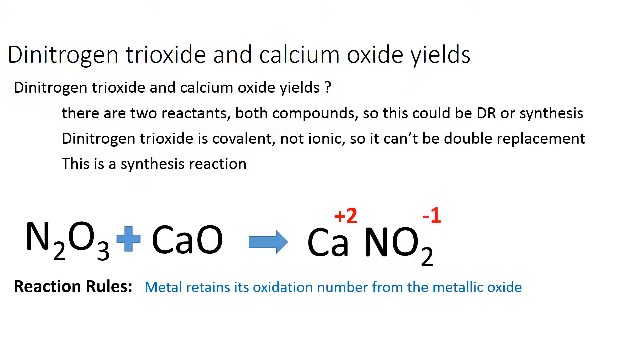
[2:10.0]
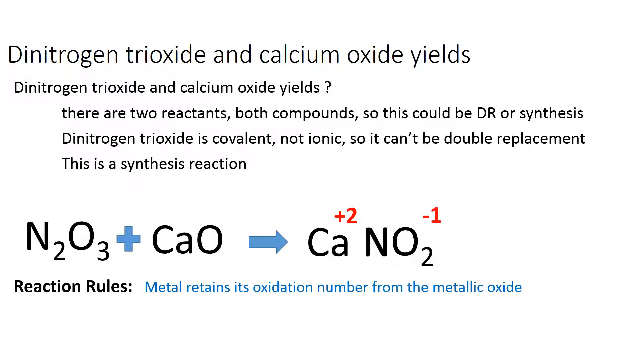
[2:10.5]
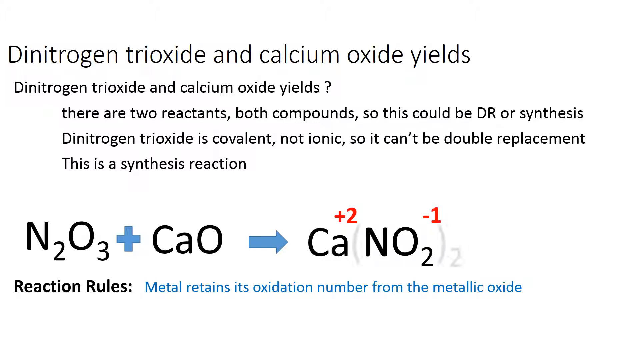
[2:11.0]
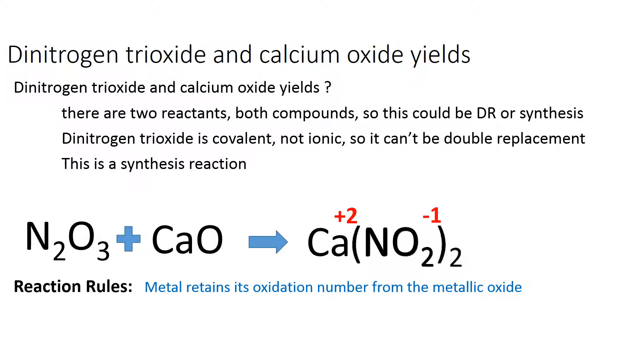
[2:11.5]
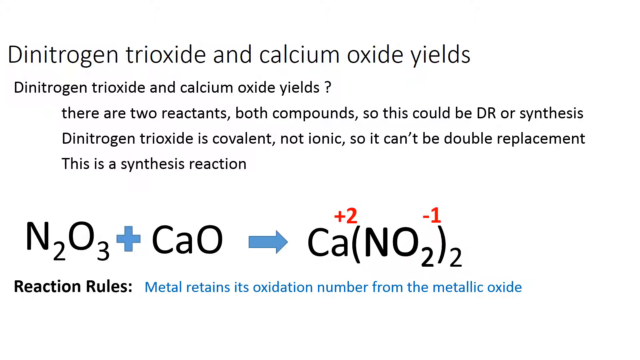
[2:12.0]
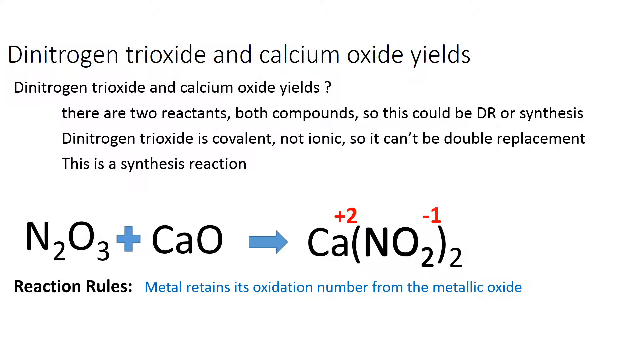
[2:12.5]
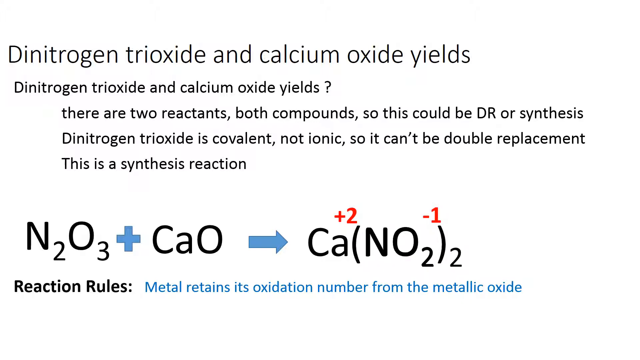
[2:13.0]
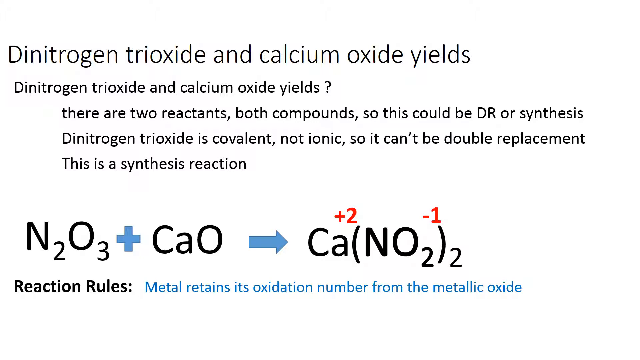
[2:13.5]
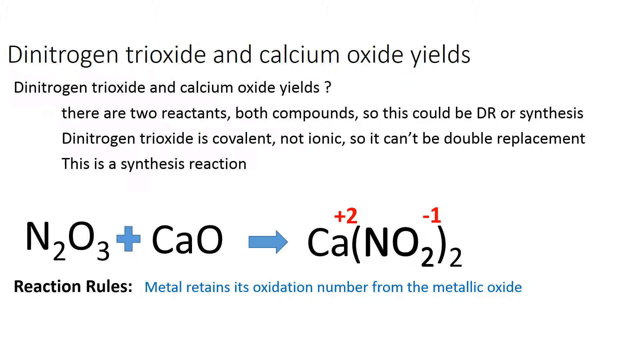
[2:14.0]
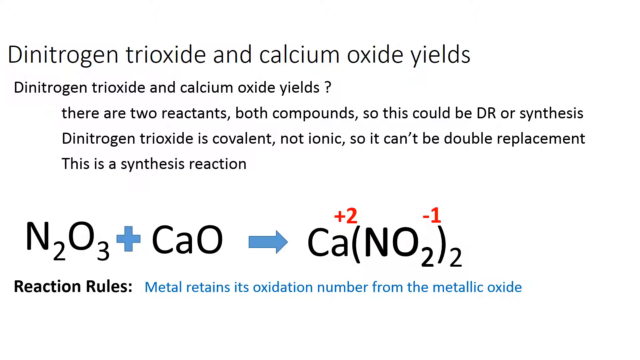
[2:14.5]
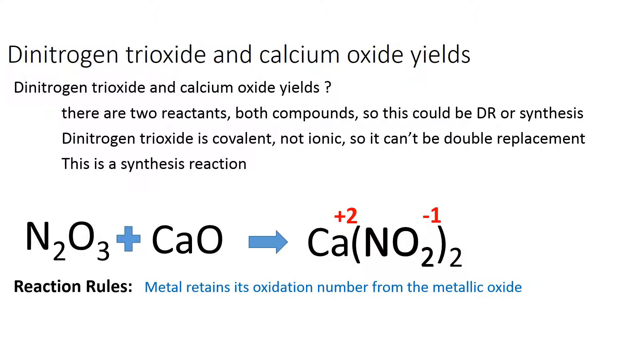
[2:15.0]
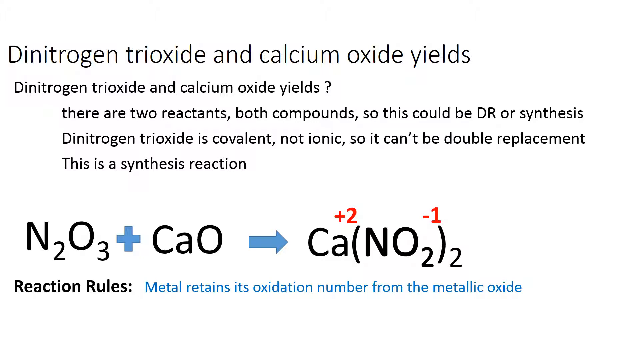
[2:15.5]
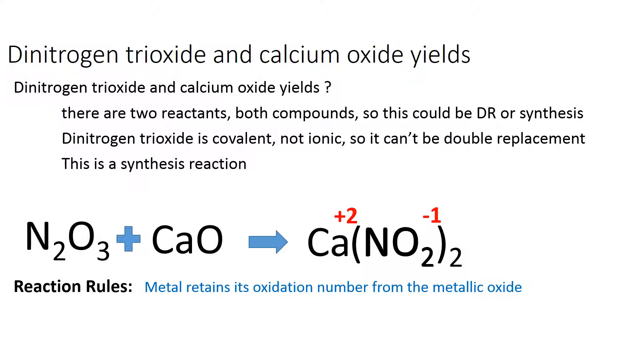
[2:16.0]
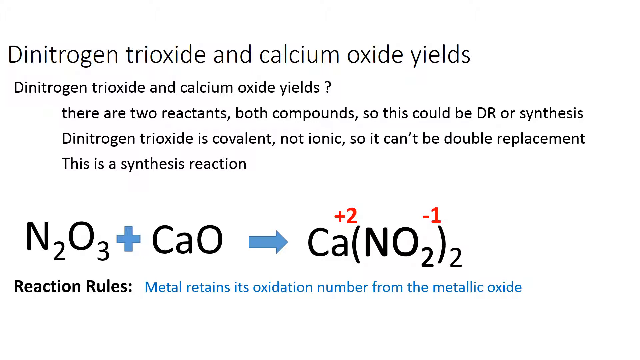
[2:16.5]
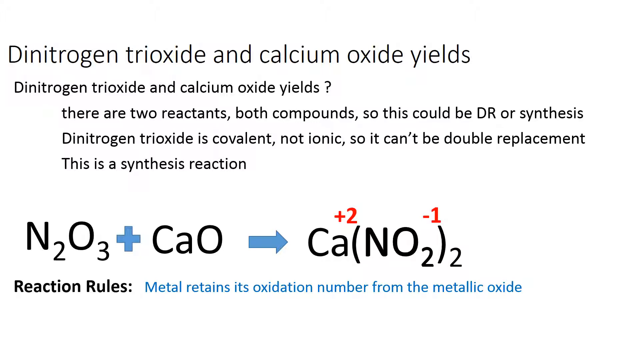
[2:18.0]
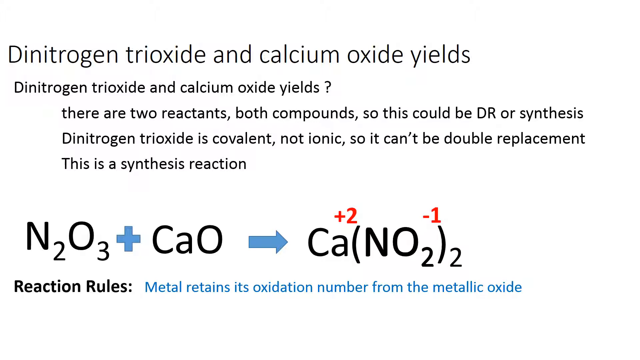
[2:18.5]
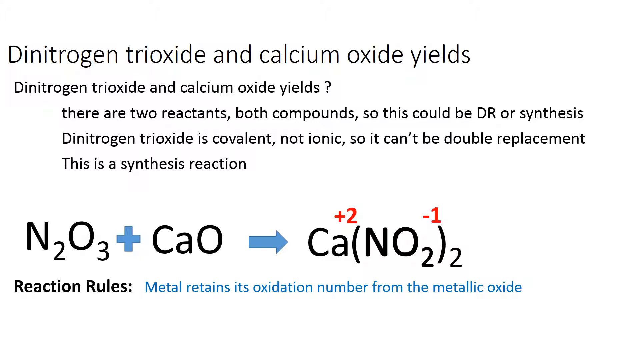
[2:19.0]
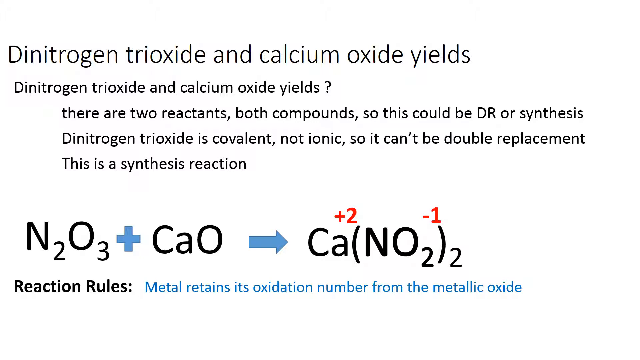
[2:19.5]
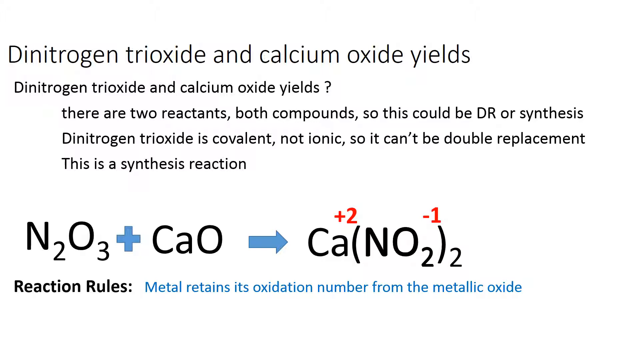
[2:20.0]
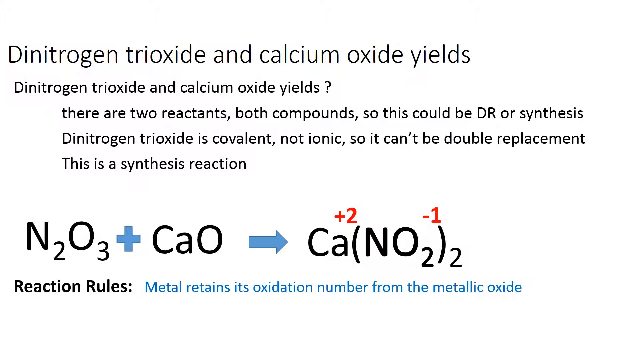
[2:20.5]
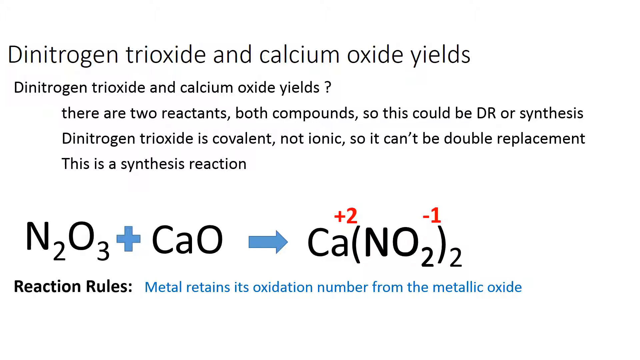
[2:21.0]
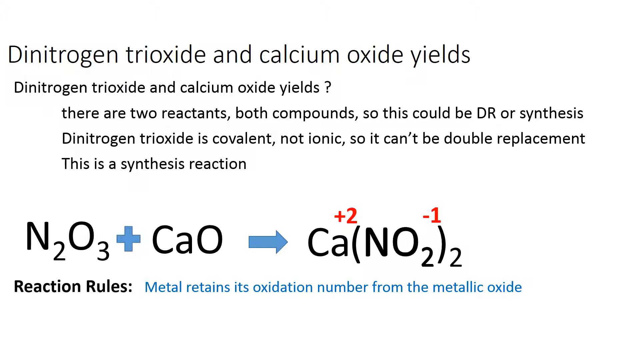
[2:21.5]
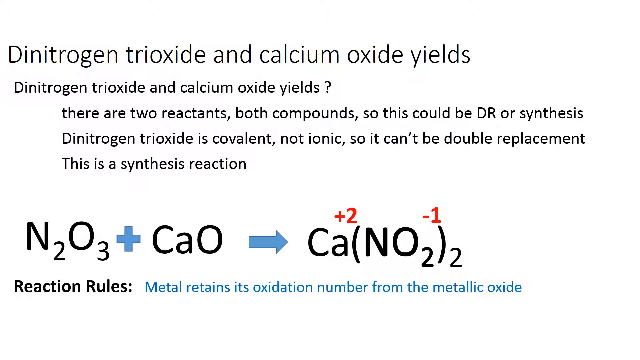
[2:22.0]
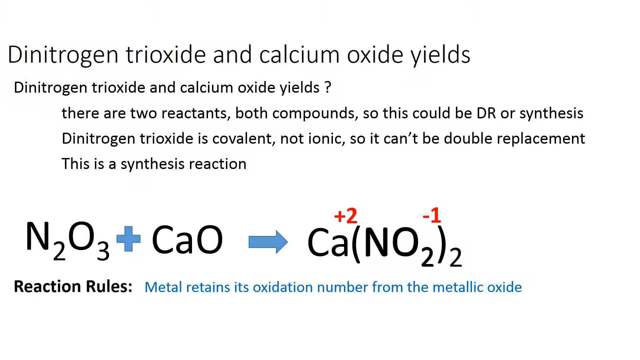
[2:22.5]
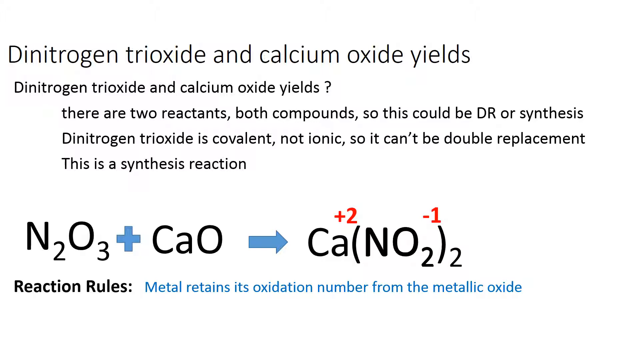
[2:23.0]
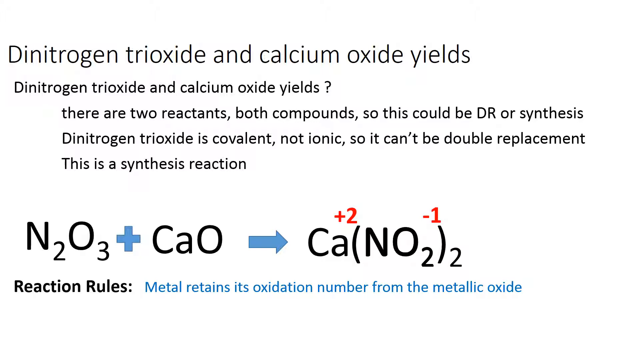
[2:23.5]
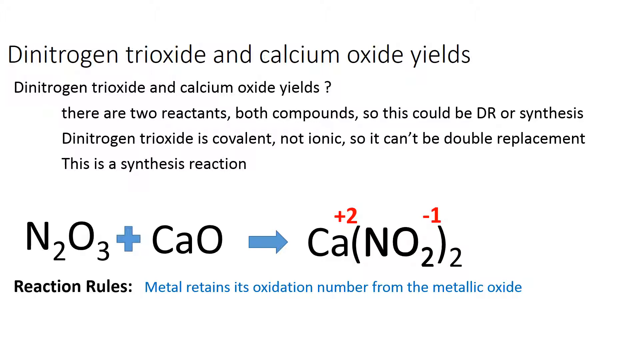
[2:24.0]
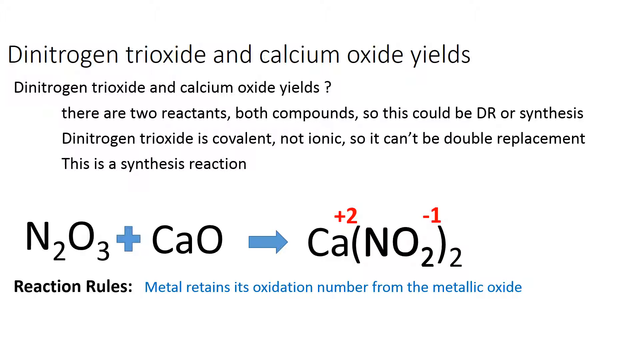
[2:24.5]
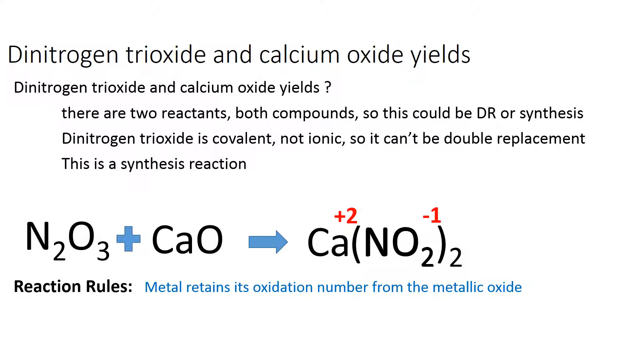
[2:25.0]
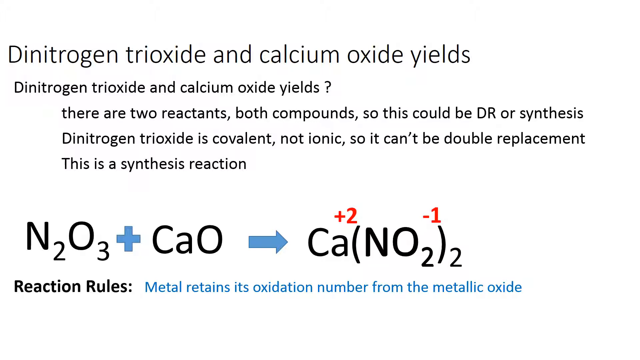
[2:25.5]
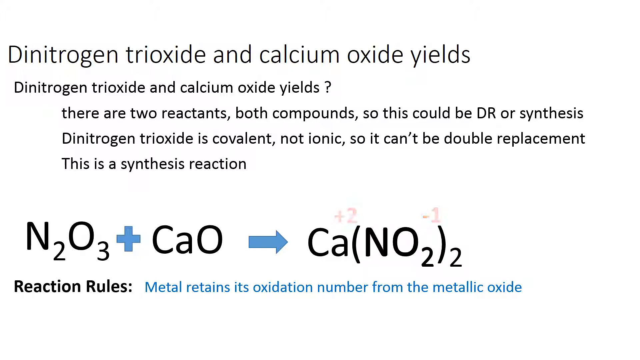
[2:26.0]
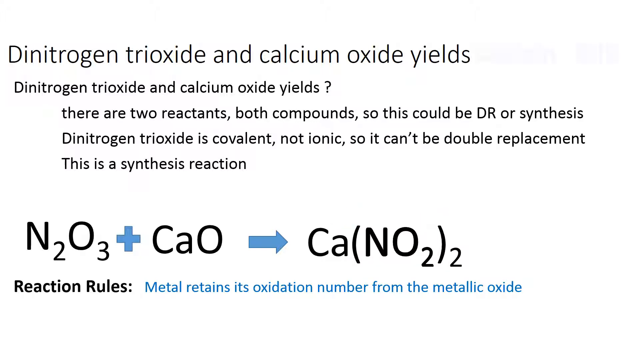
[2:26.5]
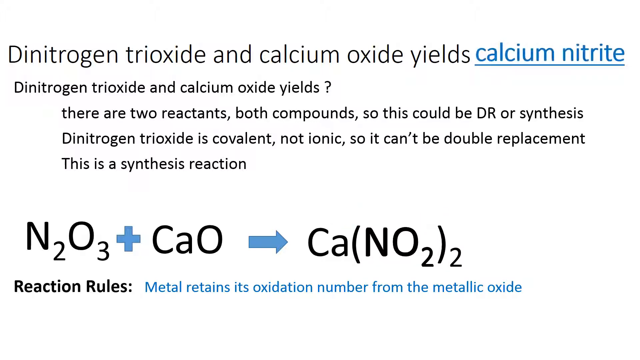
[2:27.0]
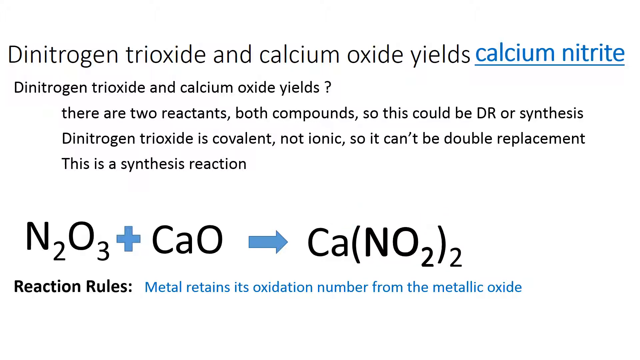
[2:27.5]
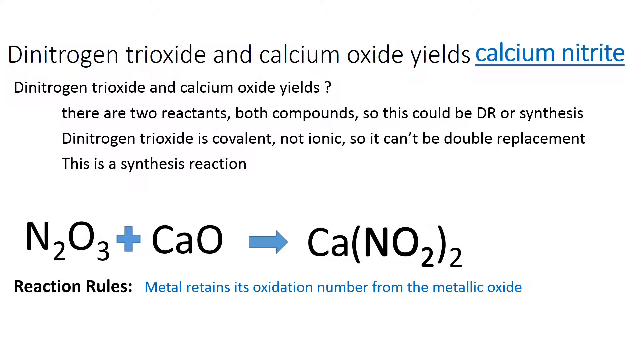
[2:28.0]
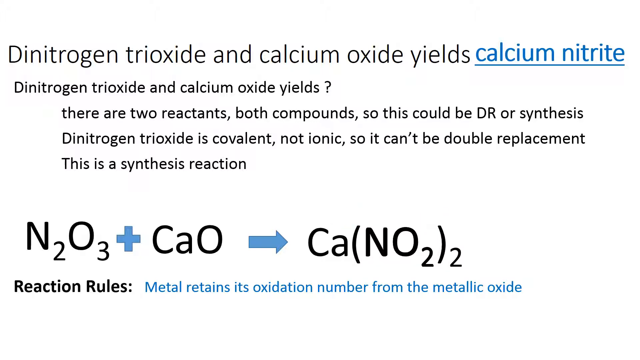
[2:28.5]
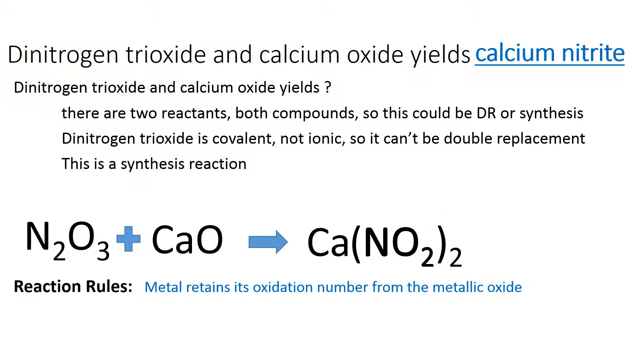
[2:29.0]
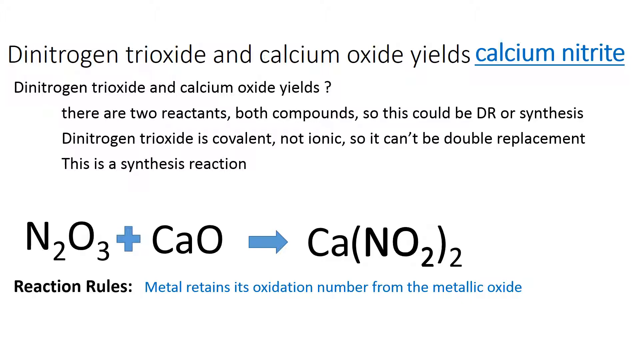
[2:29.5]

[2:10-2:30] On a white background, black text at the top says "Dinitrogen Trioxide and calcium oxide yields." Beneath it, smaller black text says "Dinitrogen trioxide and calcium oxide yields" with a ? to its right, followed by black lines saying "there are two reactants, both compounds, so this could be DR or synthesis," "Dinitrogen trioxide is covalent, not ionic, so it can't be double replacement," and "This is a synthesis reaction." Beneath that is larger black text "N2O3," a blue + mark, black text "CaO," a blue right arrow, and black text "Ca" and "NO2." Red "+2" is above and between "Ca" and "NO2," and red "-1" is to the right and above "NO2." Below is black text "Reaction Rules:" with blue text saying "Metal retains its oxidation number from the metallic oxide." The black text "NO2" changes to "(NO2)2." Both red numbers above "Ca(NO2)2" disappear. At the top, blue underlined text appears to the right of "oxide yields" that says "calcium nitrate."